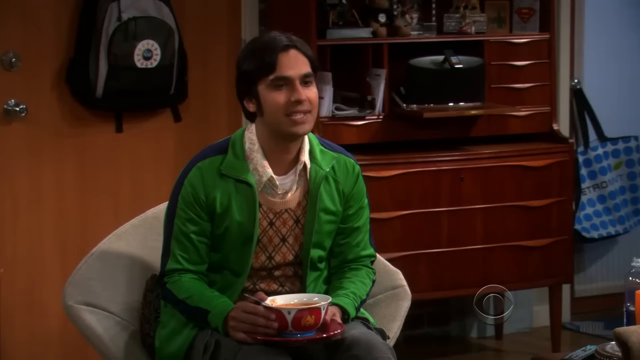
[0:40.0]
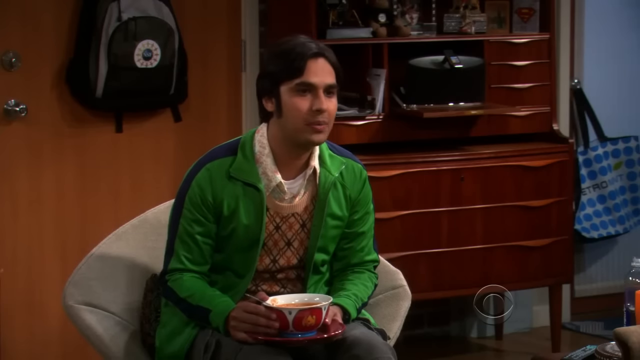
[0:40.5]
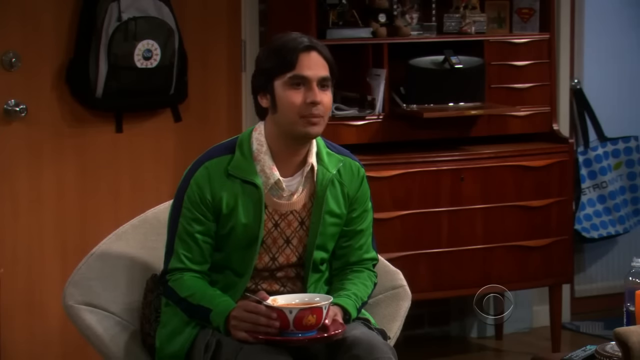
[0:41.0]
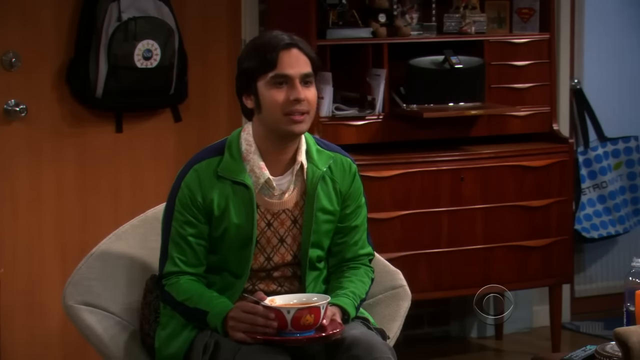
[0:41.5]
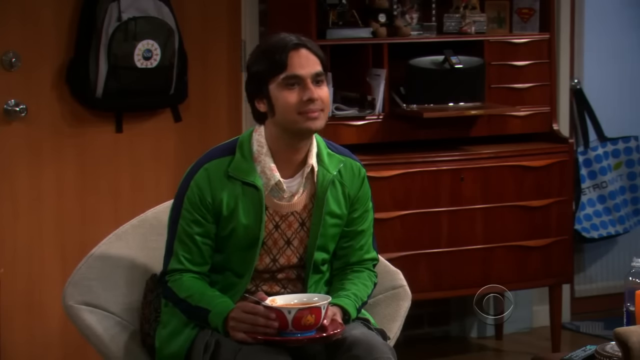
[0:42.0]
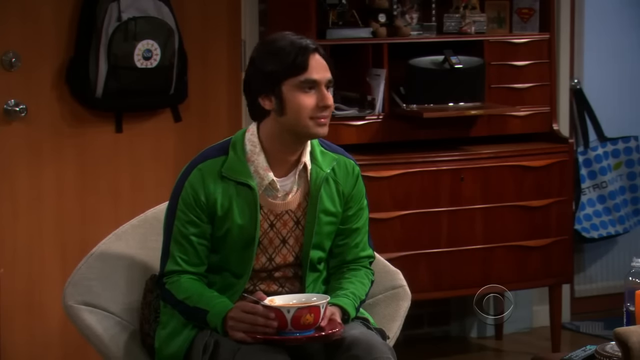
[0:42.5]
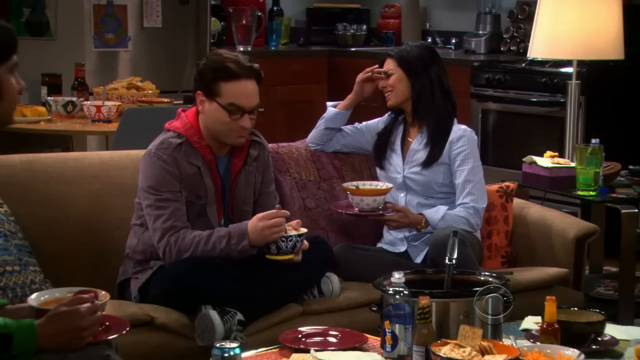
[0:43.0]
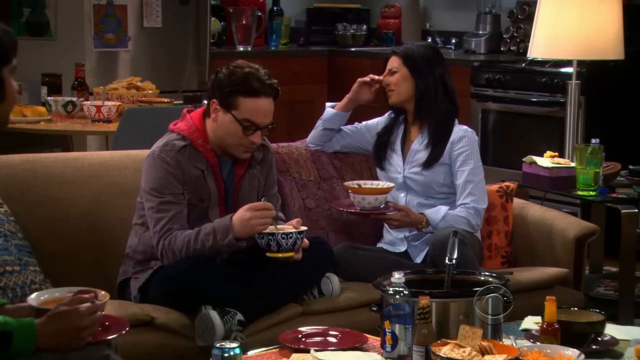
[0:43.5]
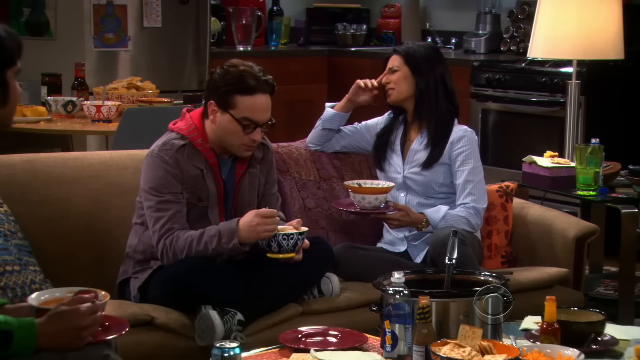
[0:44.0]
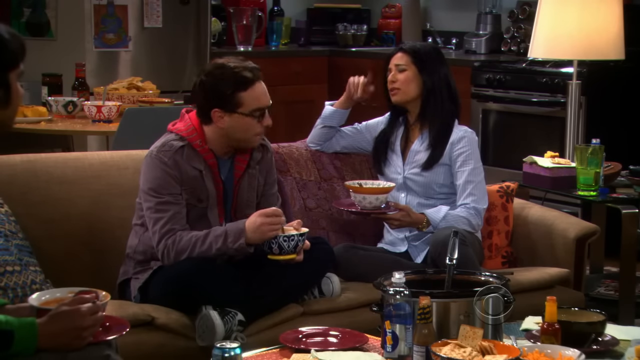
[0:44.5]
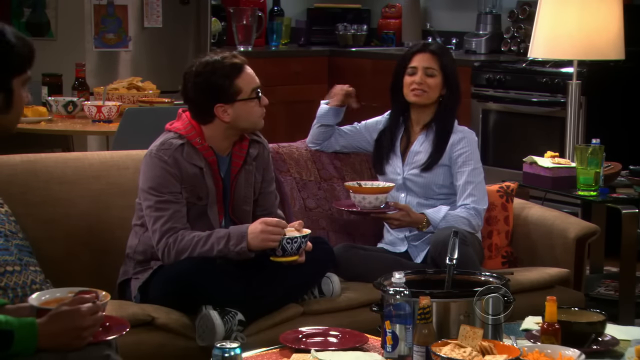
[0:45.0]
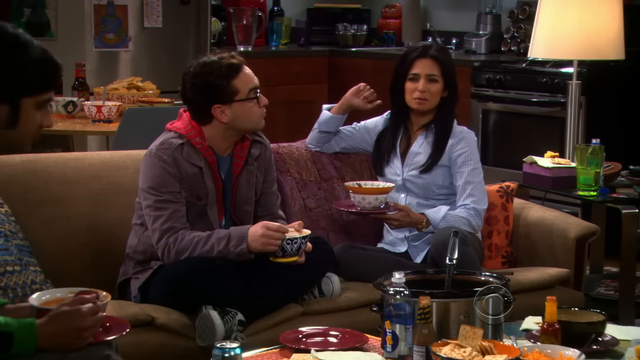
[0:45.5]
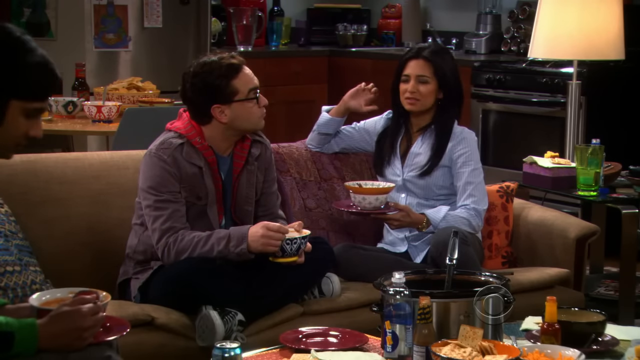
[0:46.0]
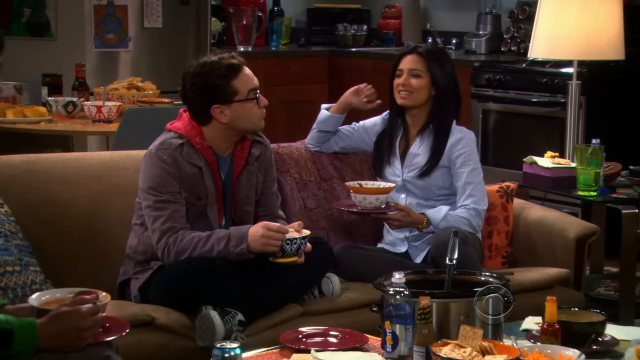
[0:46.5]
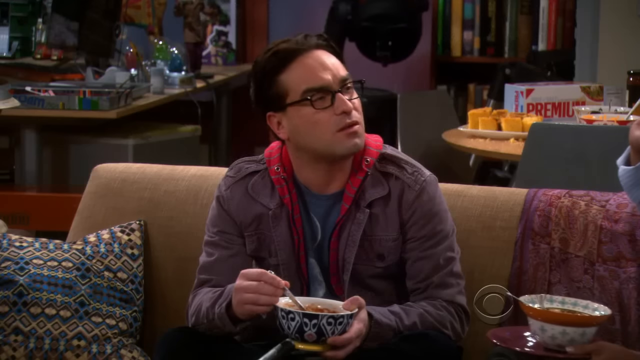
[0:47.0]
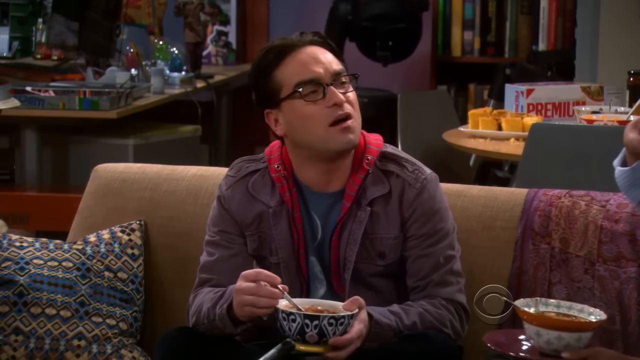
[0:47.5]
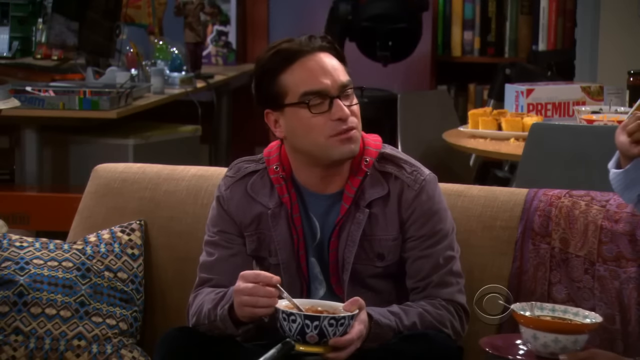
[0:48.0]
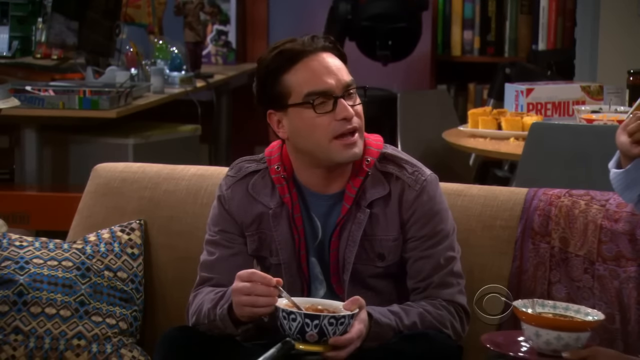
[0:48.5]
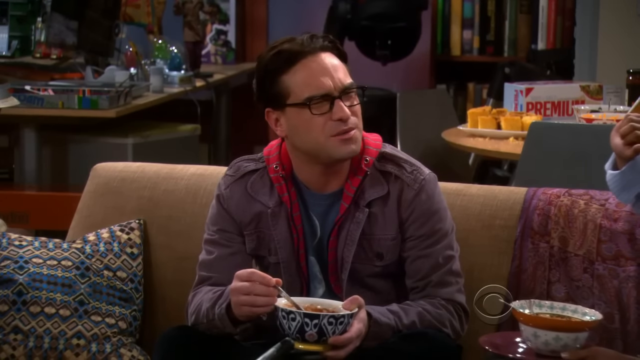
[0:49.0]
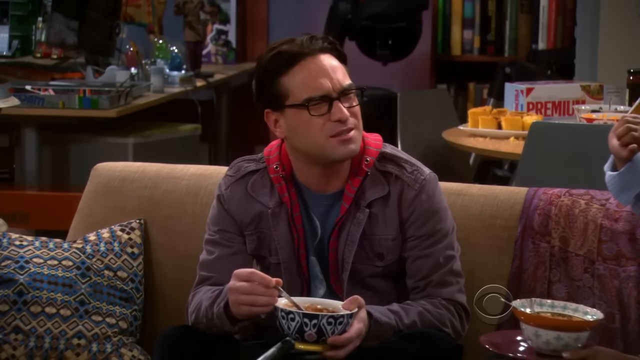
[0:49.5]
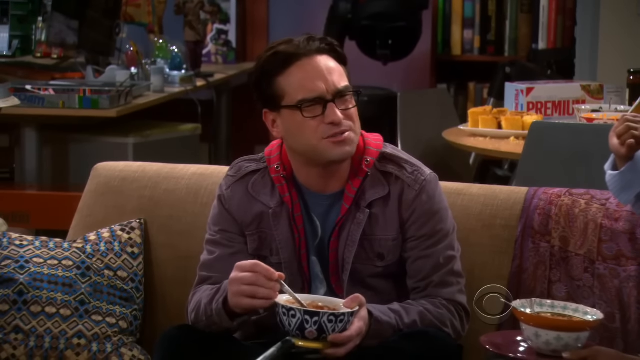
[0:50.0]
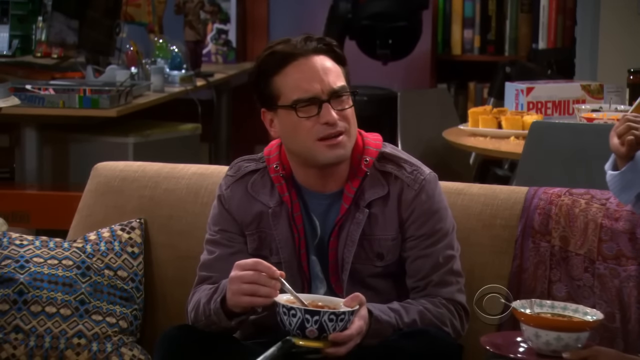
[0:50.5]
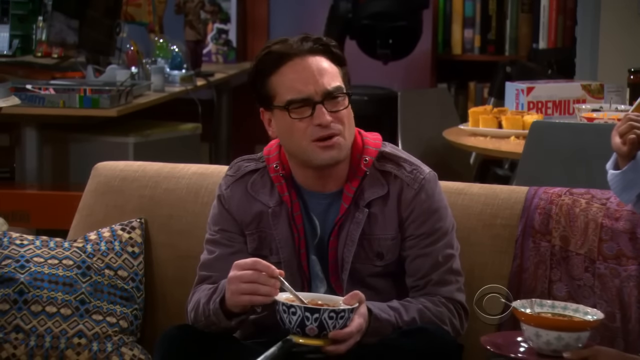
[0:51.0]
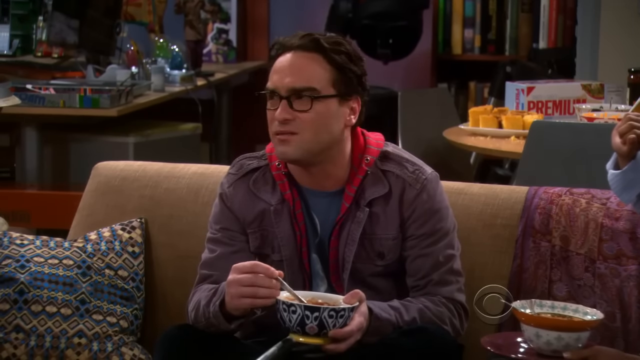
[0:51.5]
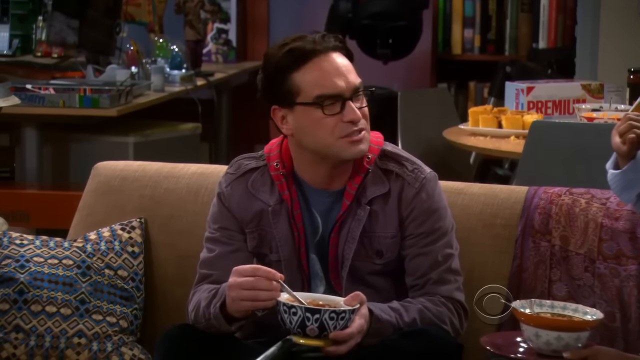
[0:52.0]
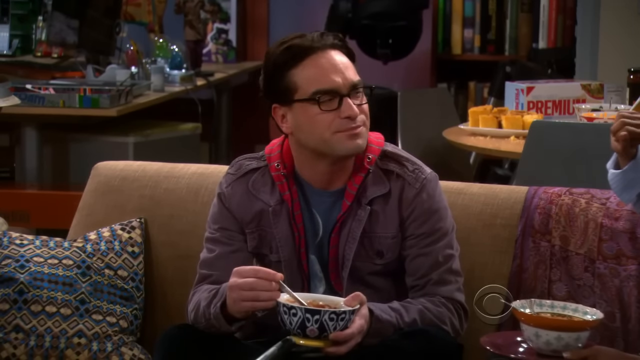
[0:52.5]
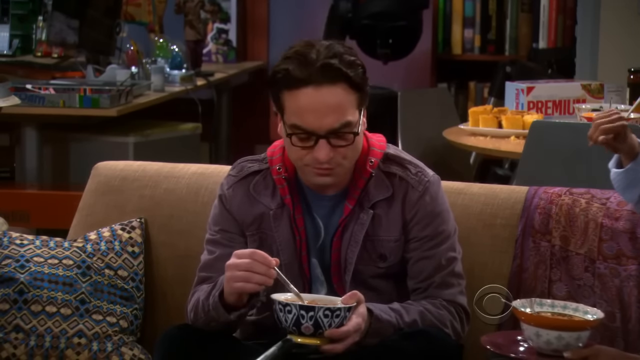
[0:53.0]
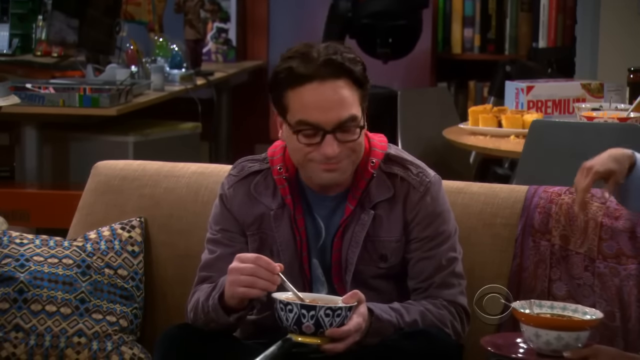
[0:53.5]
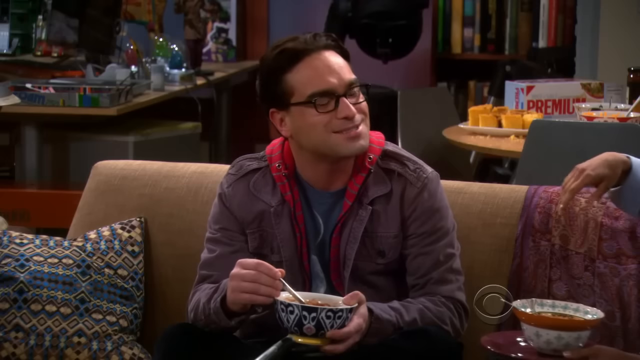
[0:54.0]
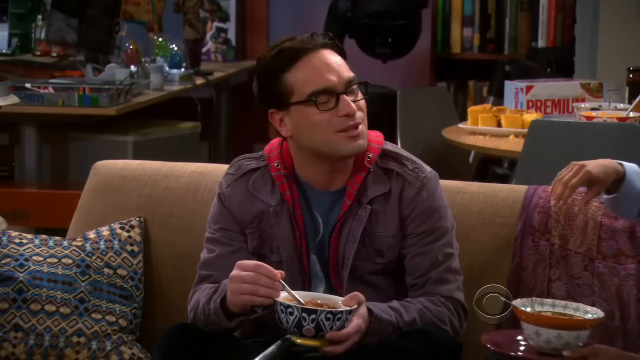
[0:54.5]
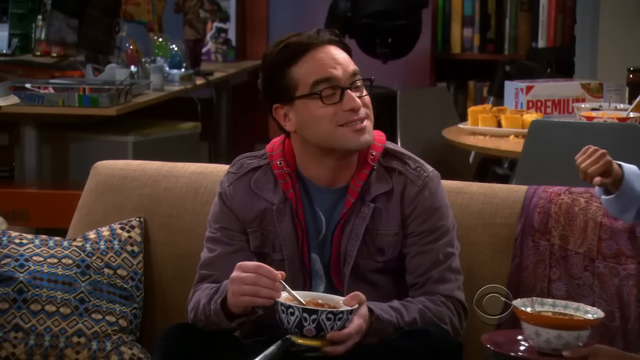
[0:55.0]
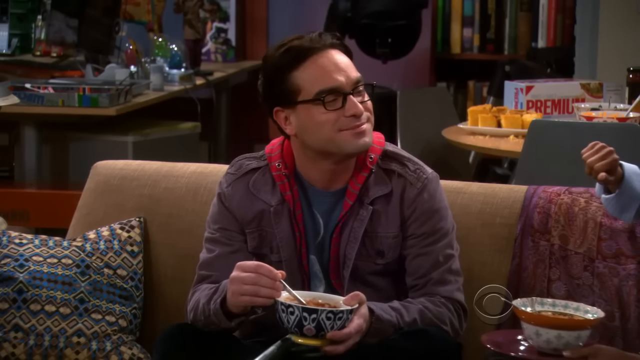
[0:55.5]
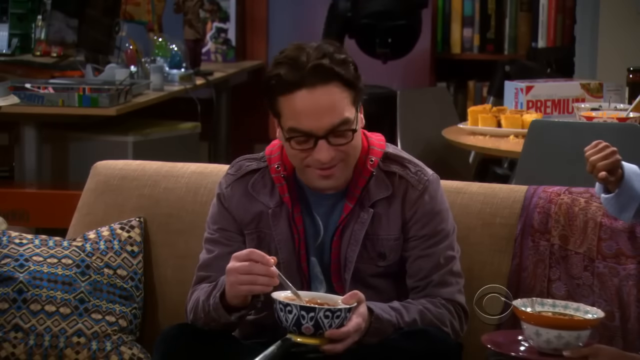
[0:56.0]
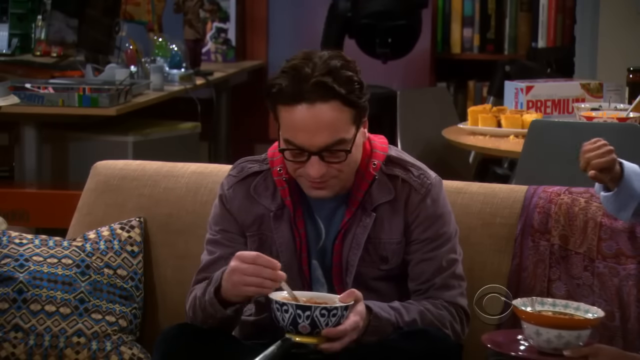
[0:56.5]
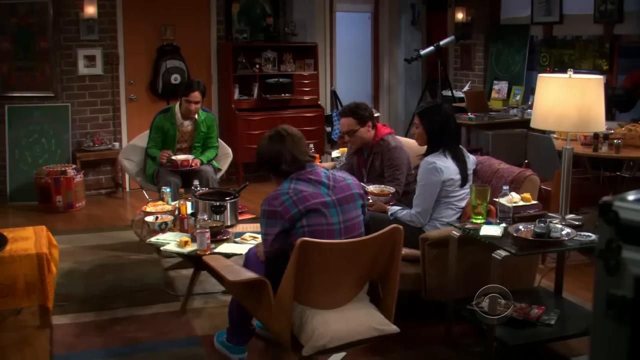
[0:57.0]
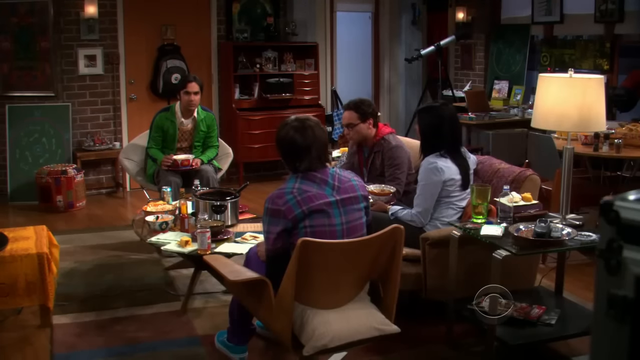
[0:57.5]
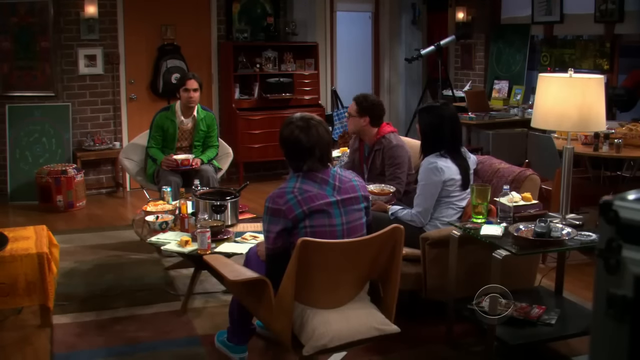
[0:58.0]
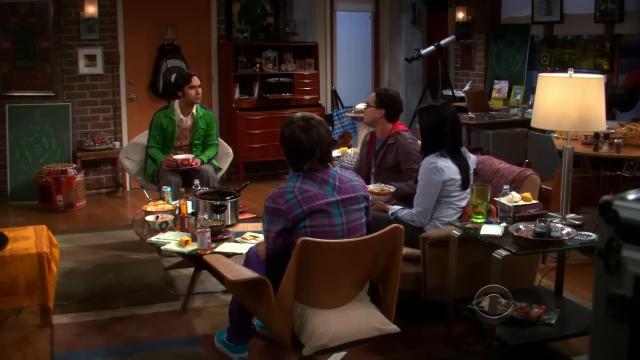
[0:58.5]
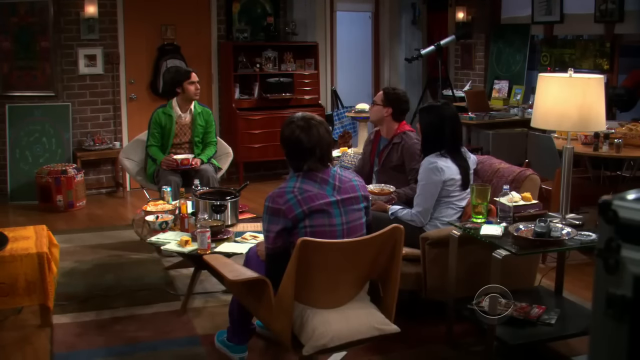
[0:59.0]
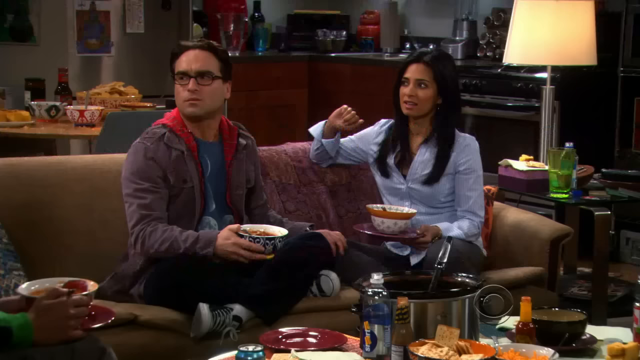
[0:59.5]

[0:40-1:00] In Raj's apartment, Raj sits on his chair, wearing his green jacket with a sweater underneath. Leonard sits on the couch in his jacket and glasses, apparently eating maybe a bowl of soup, circling his spoon. Howard is there in his flannel shirt, along with Raj's girlfriend, who sits on the couch talking to them. There are crackers on the table behind them, and the kitchen is visible. A backpack hangs on the door, and there is a light like a lamp on the table. Penny is not seen.